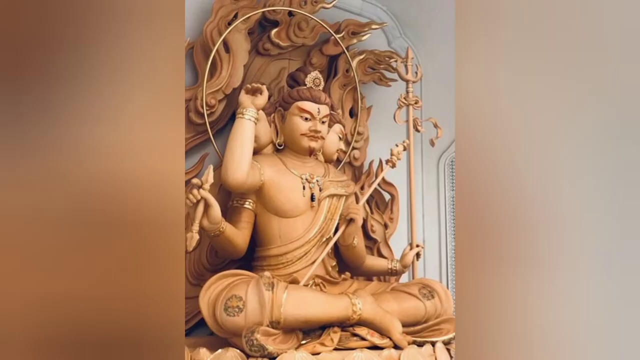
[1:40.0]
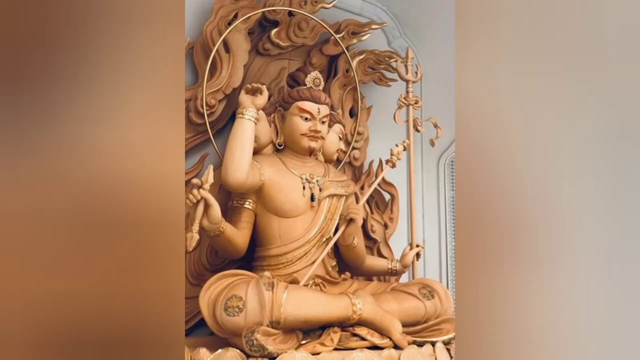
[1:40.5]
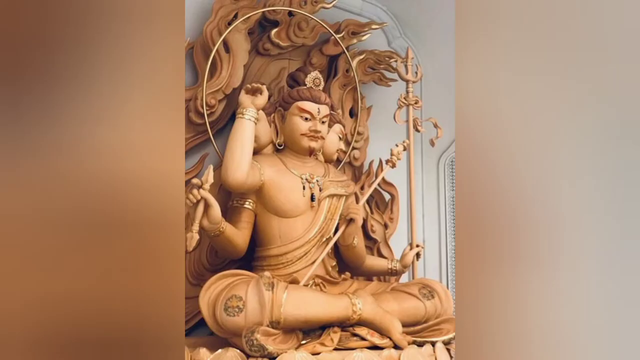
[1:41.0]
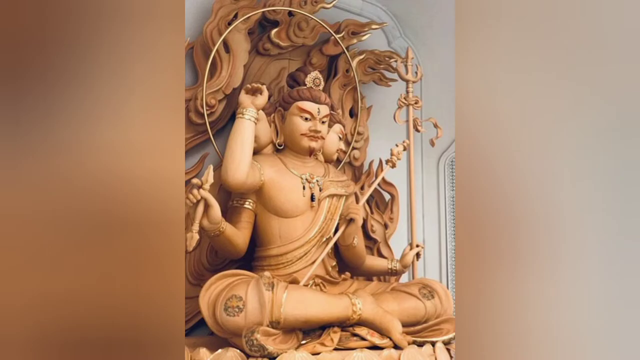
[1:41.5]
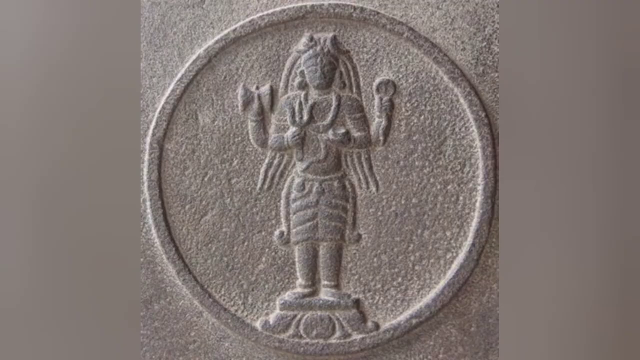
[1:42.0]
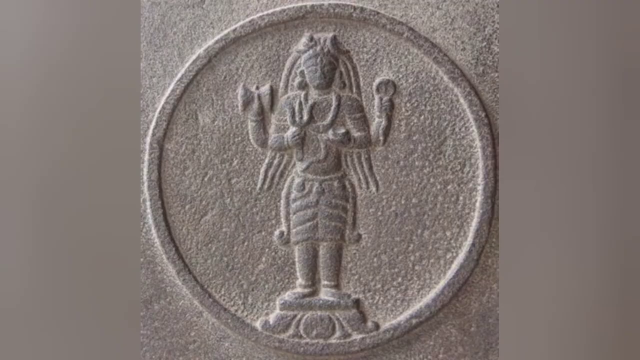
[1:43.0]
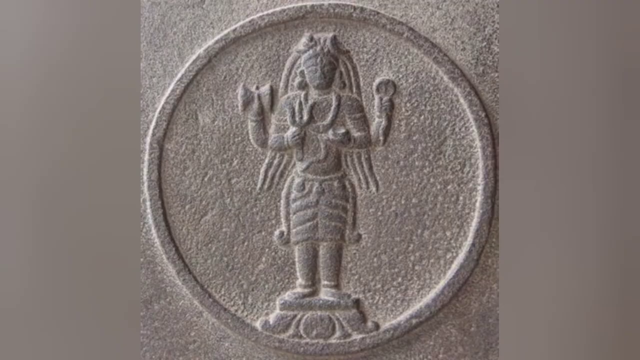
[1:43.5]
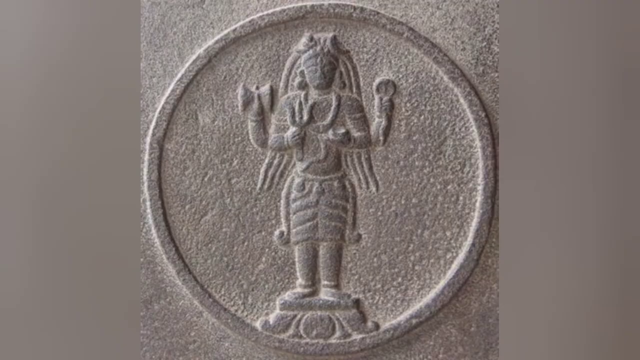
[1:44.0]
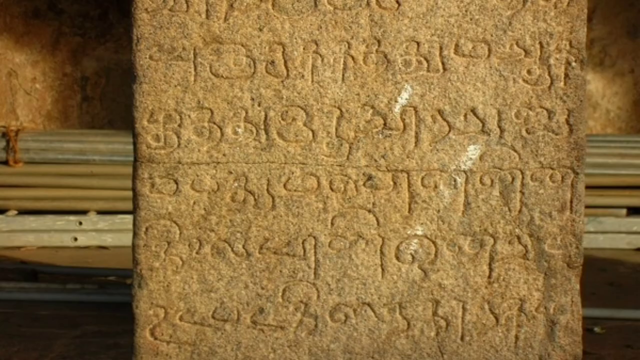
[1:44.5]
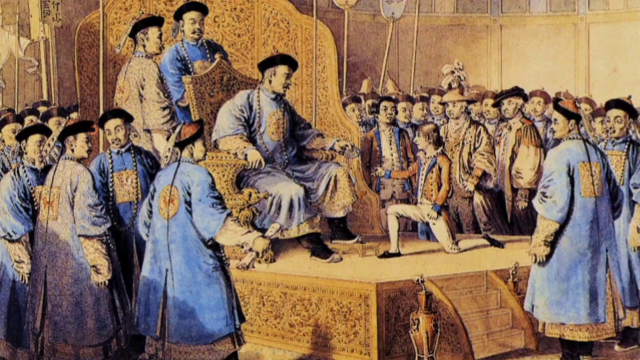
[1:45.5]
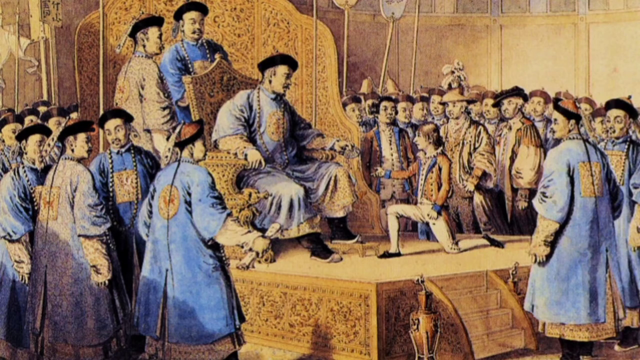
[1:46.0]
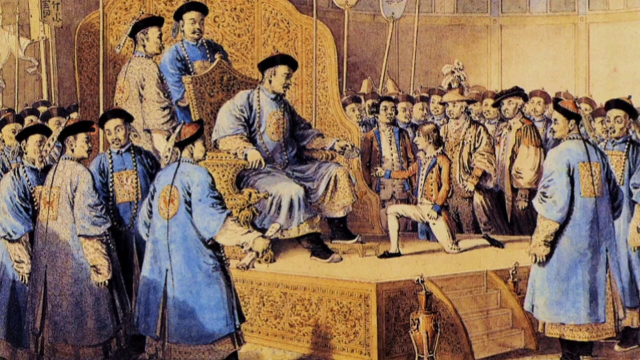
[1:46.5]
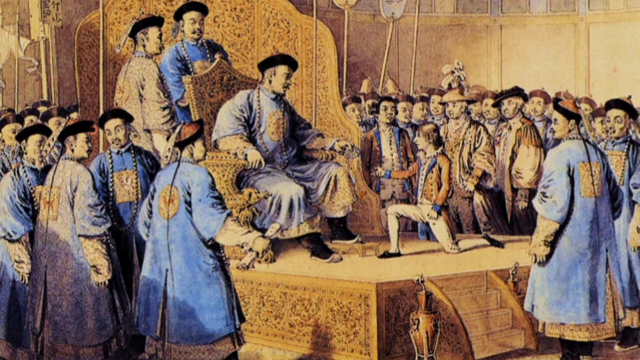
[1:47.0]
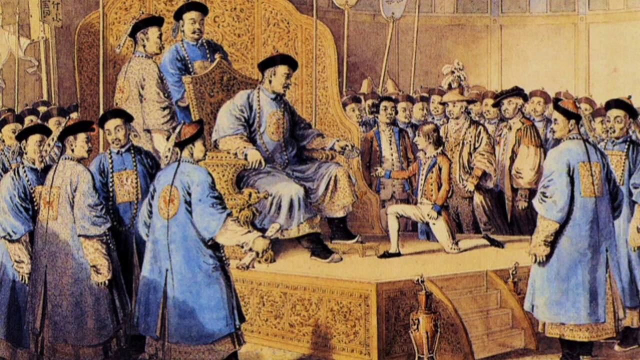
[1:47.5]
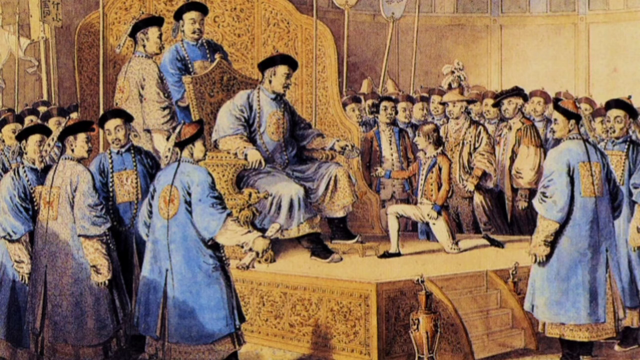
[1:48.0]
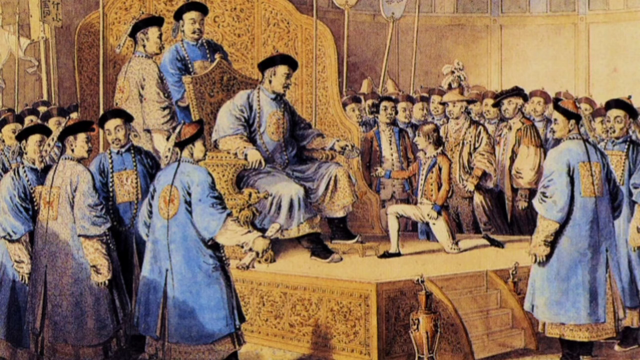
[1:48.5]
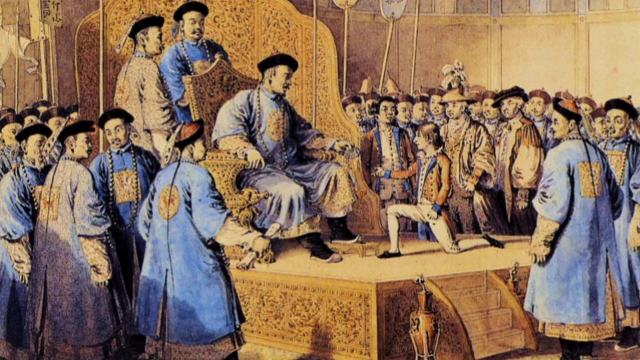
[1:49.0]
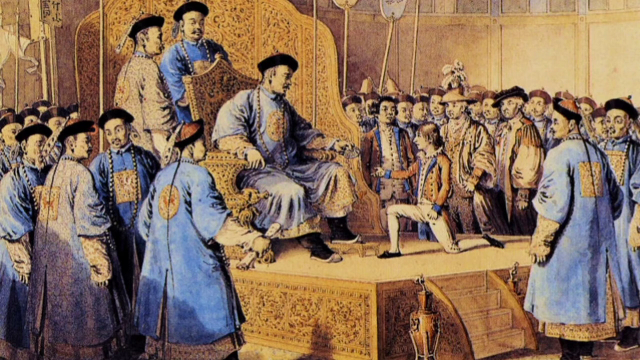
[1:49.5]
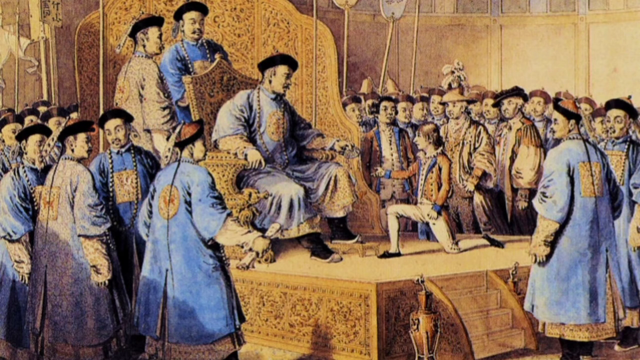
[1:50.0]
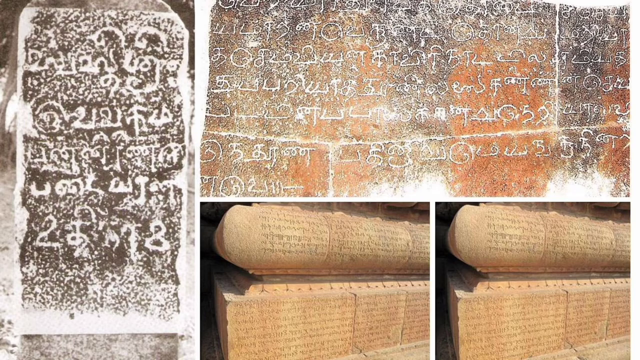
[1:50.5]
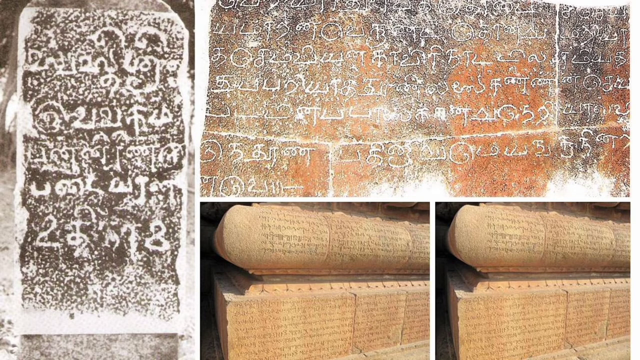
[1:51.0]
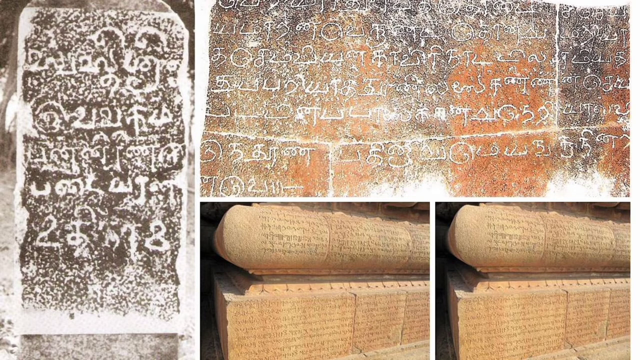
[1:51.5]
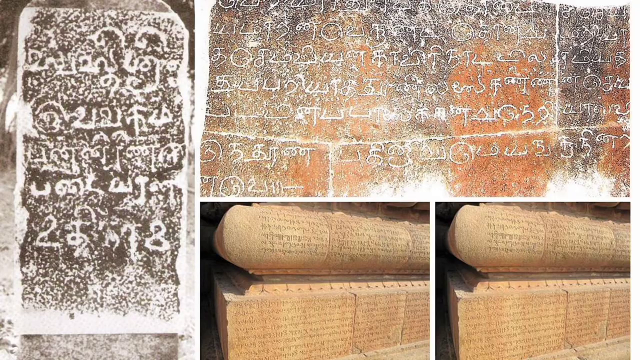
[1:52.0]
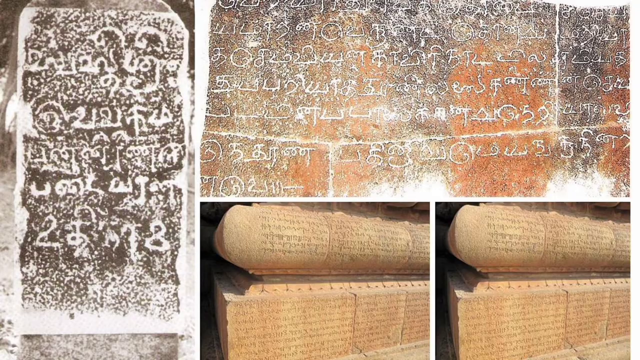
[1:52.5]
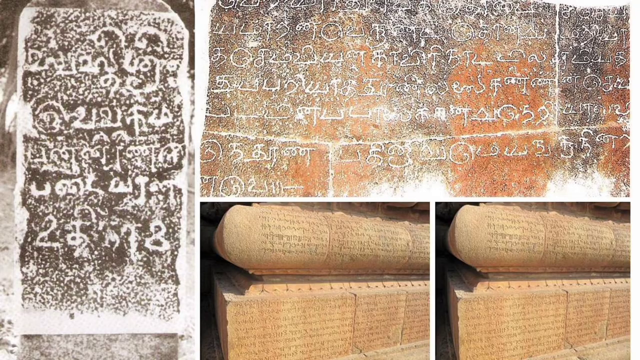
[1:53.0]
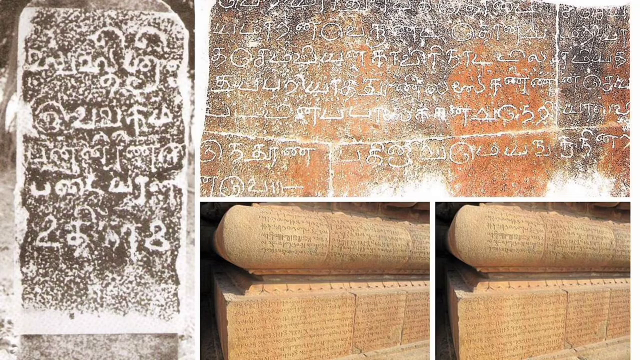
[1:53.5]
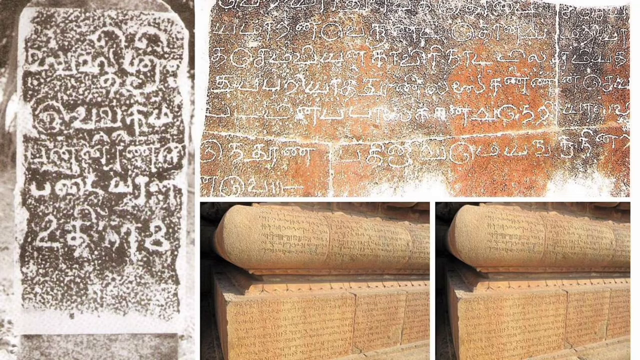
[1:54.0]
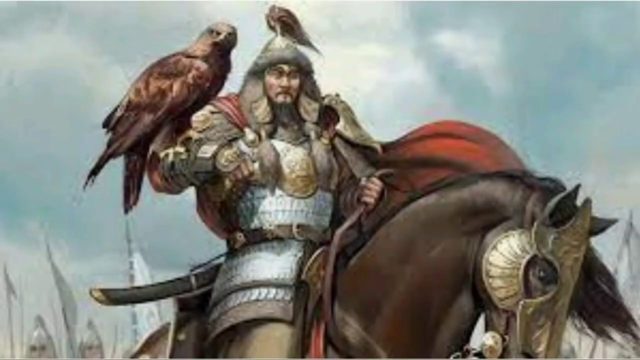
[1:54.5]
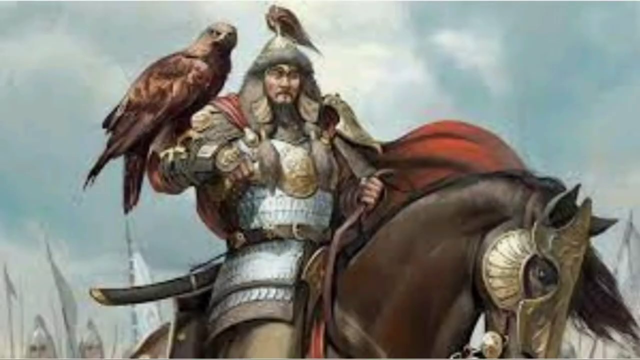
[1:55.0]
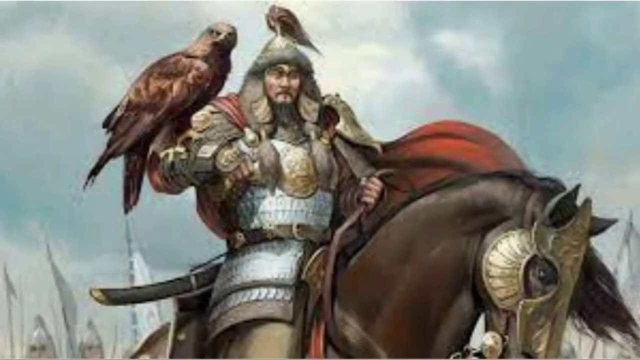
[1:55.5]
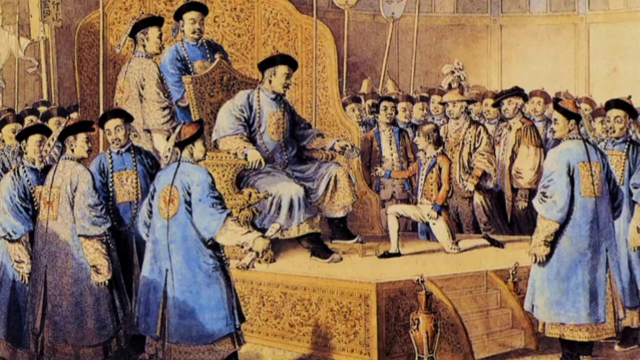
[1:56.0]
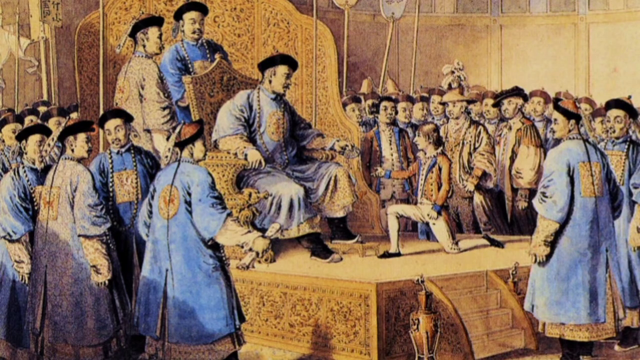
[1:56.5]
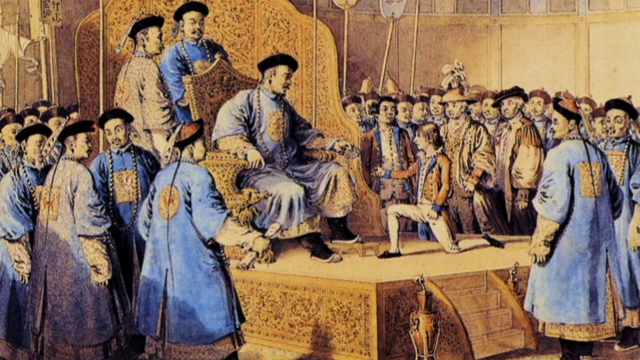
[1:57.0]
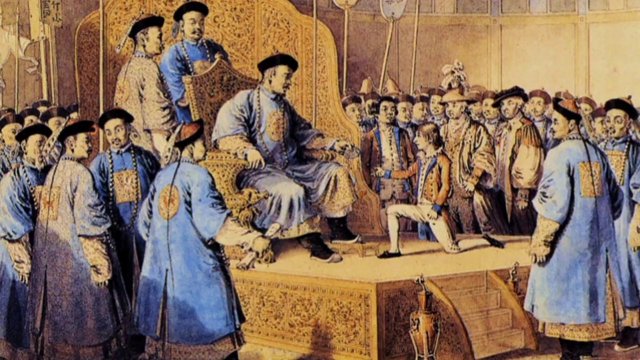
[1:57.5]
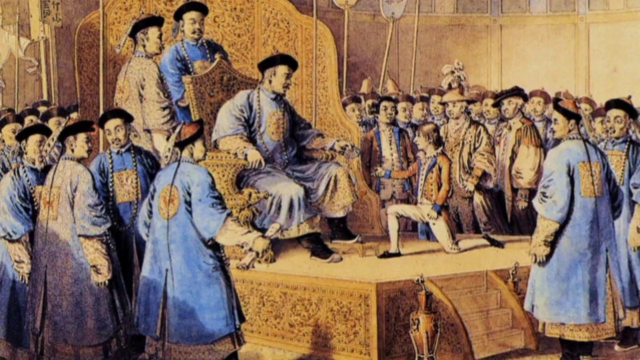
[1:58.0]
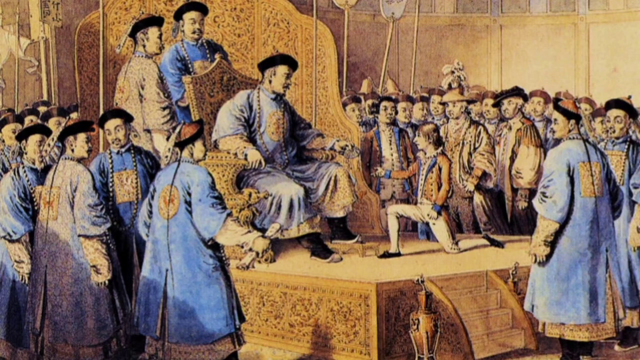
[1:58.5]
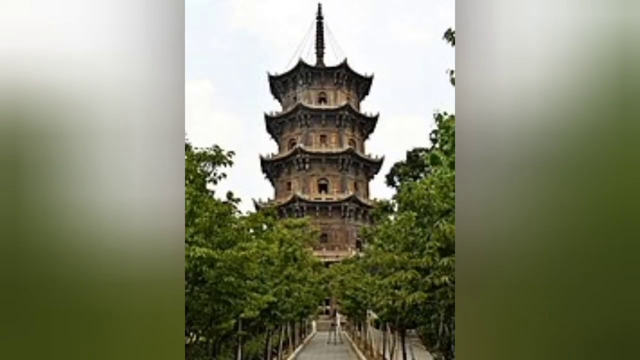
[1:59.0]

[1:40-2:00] A statue of a Buddhist god is shown first. Then the British man appears before the emperor again, followed by the tablets with writing seen before, the Genghis Khan figure, towers and statues. The warlord with the bird of prey has banners behind him, and the bird is enormous, looking more like an eagle than a hawk. The Chinese and the British appear again, and toward the end more statues of Buddhist figures are shown.